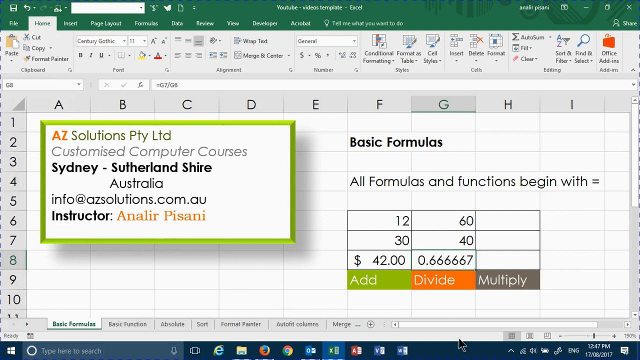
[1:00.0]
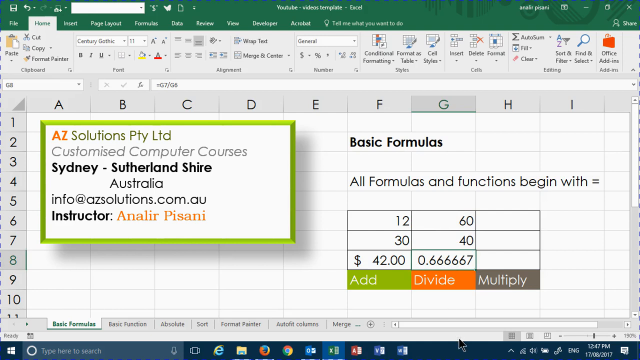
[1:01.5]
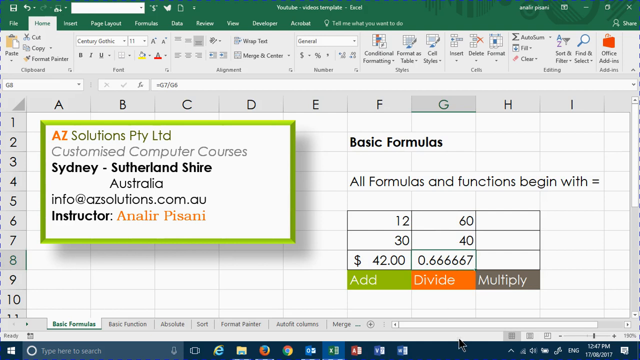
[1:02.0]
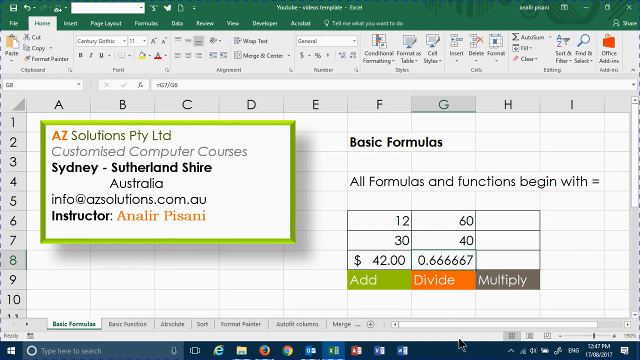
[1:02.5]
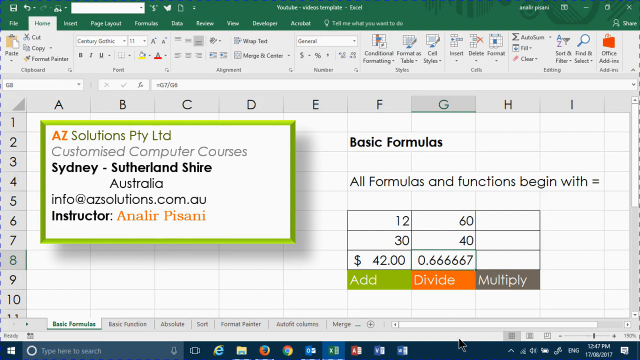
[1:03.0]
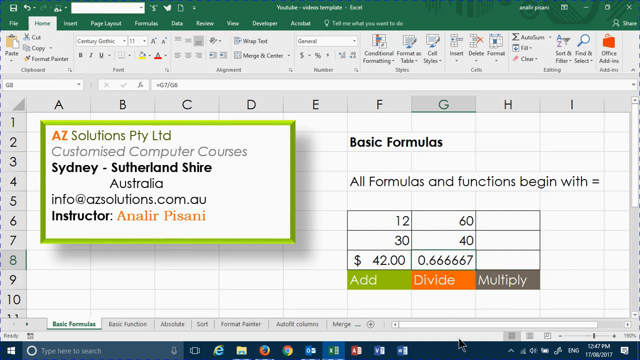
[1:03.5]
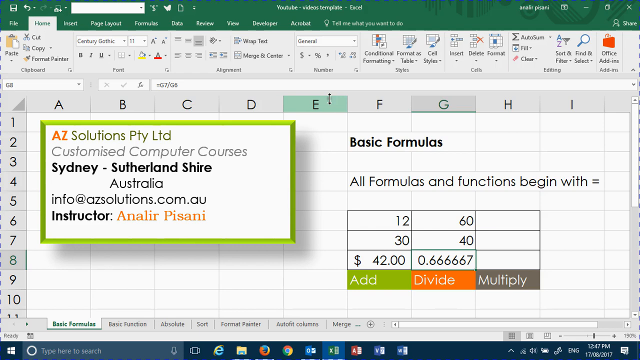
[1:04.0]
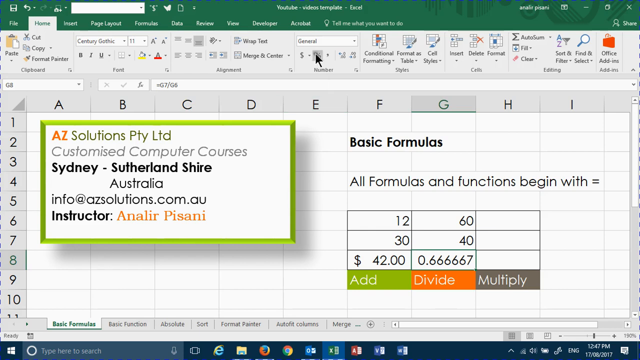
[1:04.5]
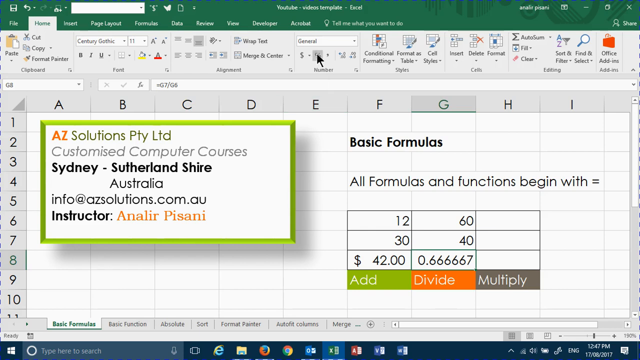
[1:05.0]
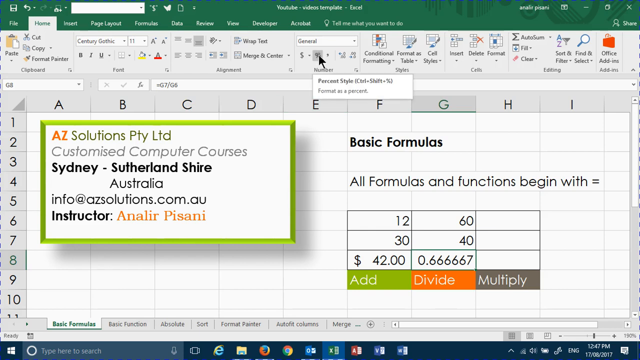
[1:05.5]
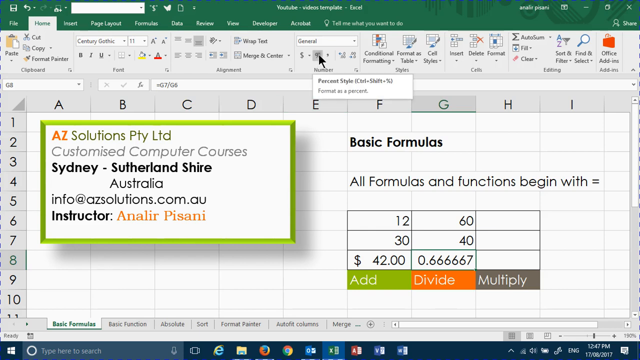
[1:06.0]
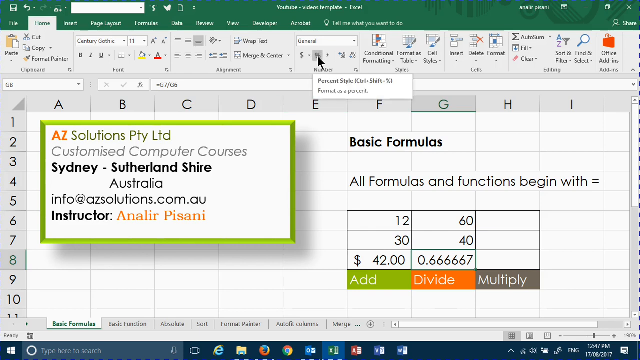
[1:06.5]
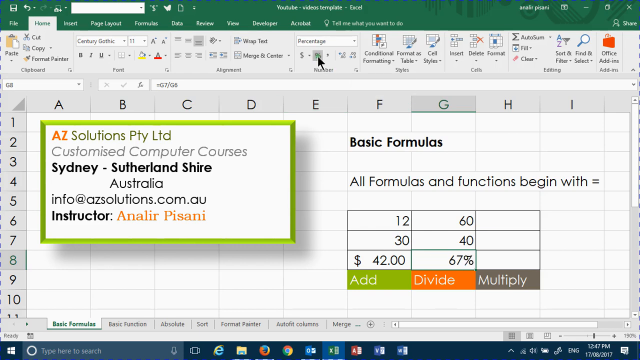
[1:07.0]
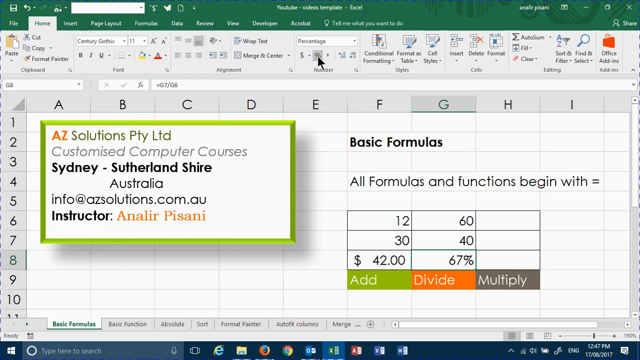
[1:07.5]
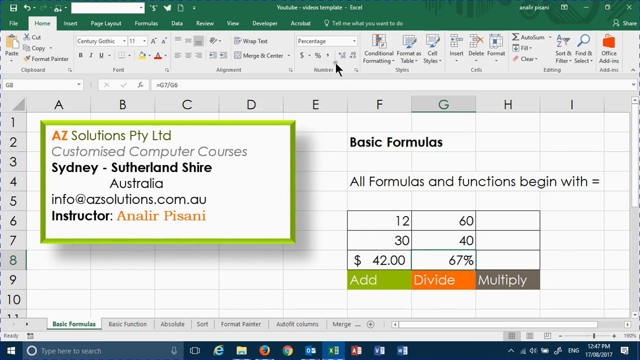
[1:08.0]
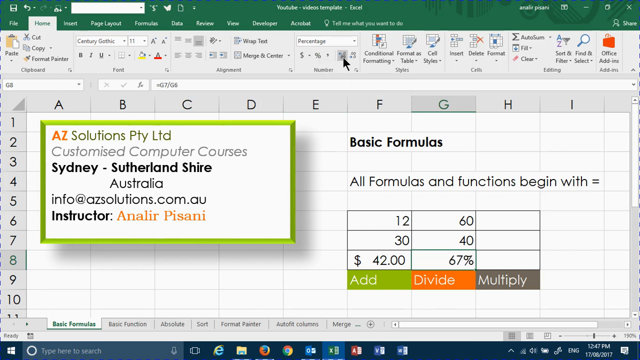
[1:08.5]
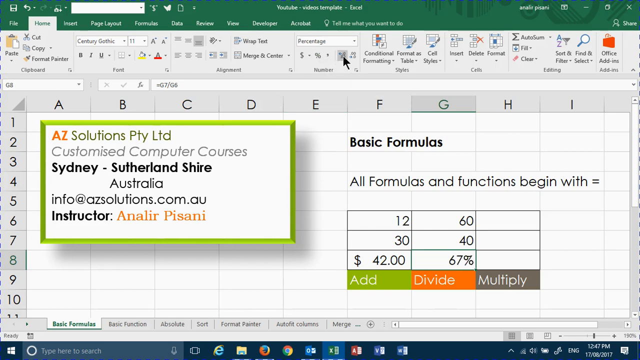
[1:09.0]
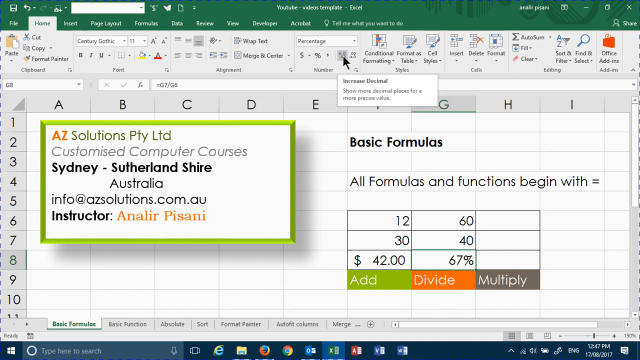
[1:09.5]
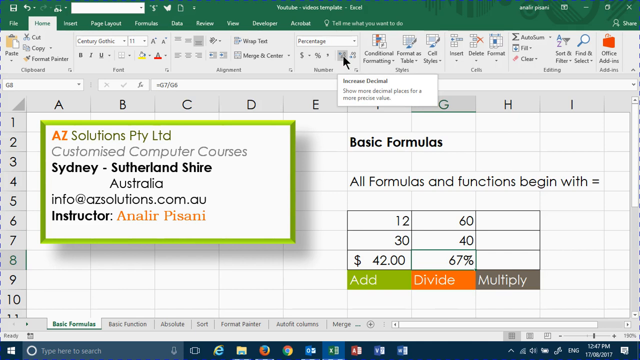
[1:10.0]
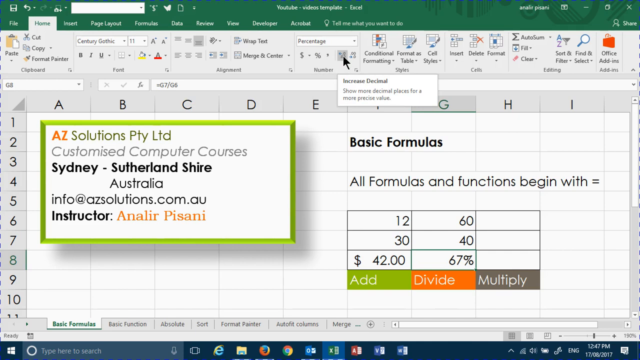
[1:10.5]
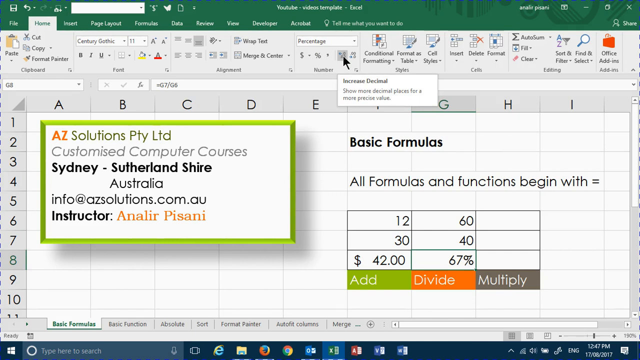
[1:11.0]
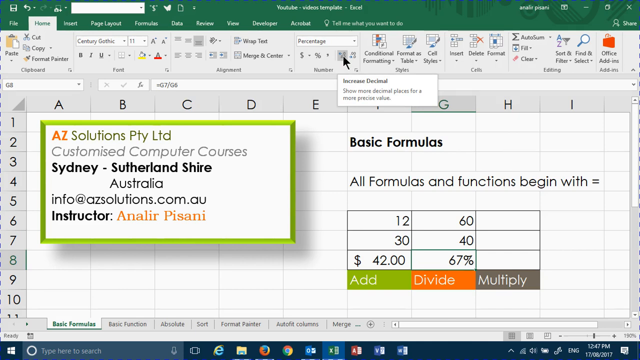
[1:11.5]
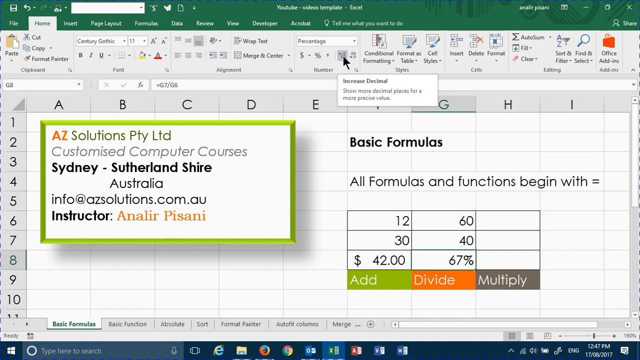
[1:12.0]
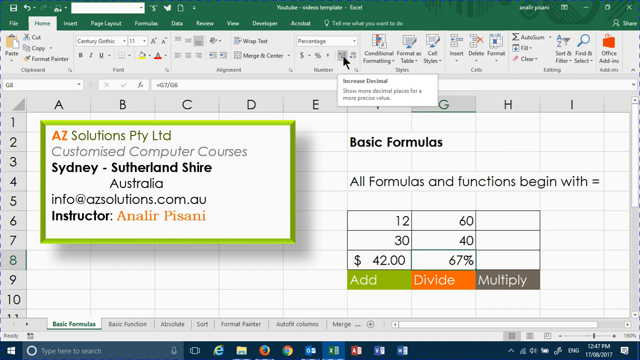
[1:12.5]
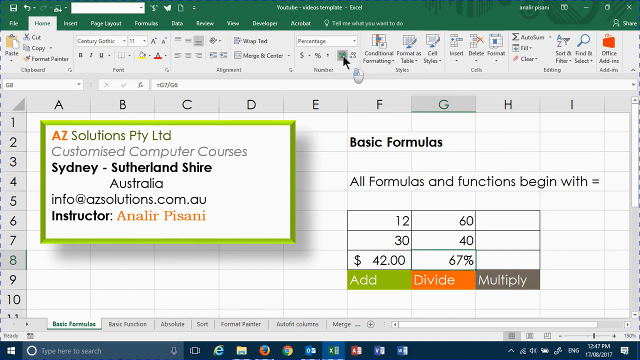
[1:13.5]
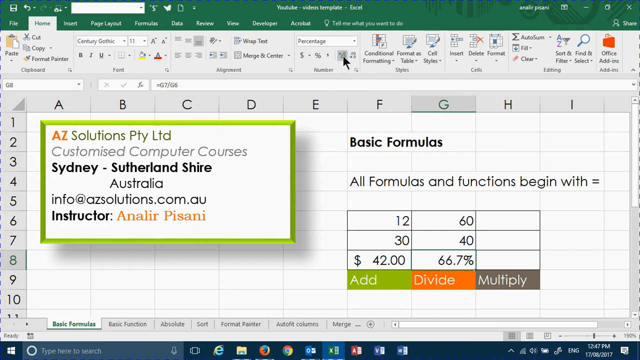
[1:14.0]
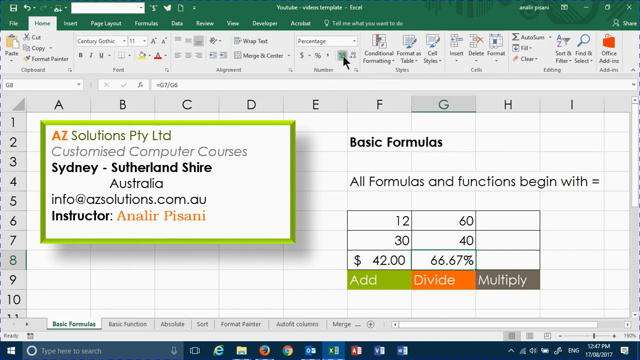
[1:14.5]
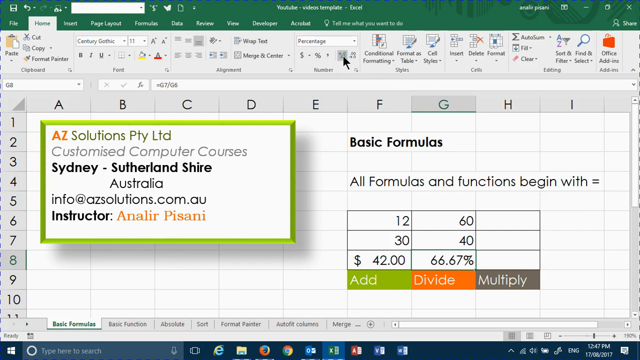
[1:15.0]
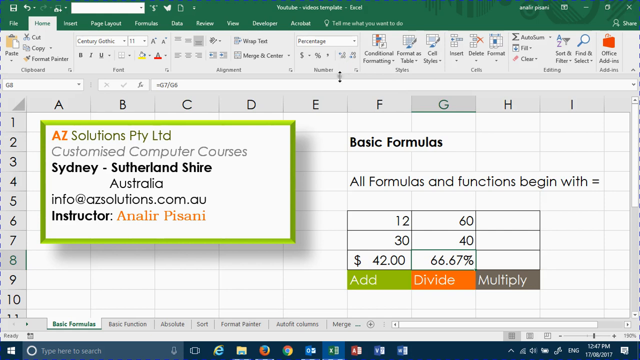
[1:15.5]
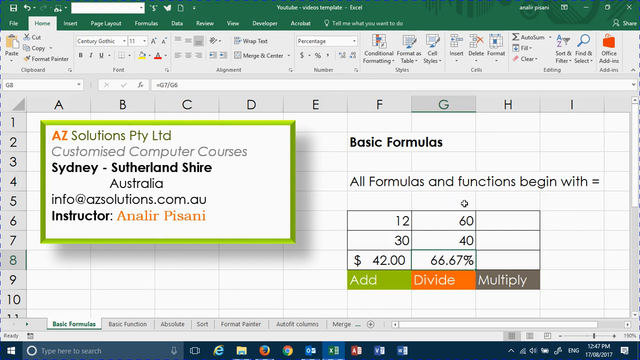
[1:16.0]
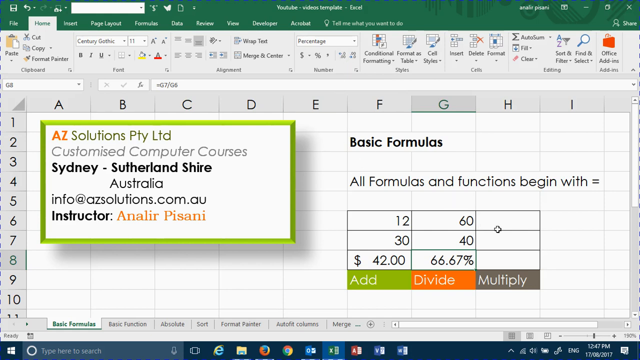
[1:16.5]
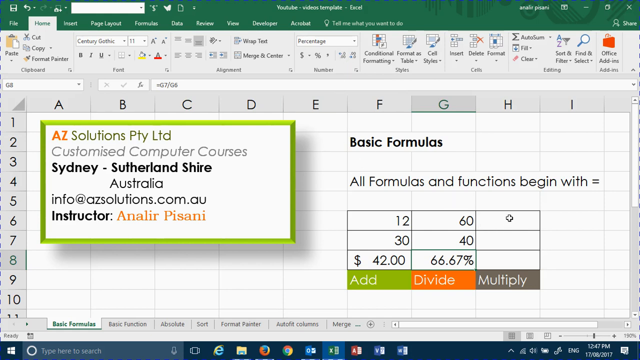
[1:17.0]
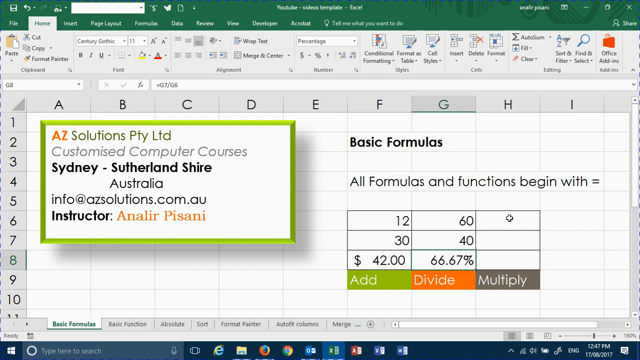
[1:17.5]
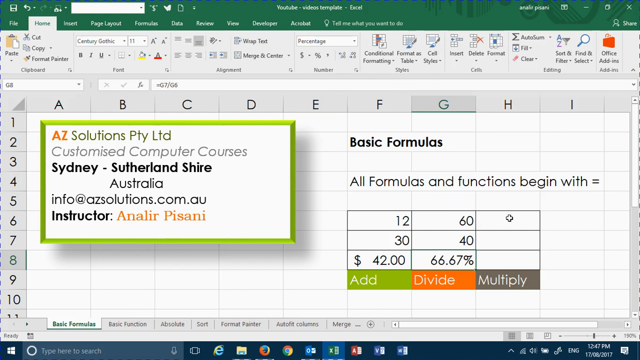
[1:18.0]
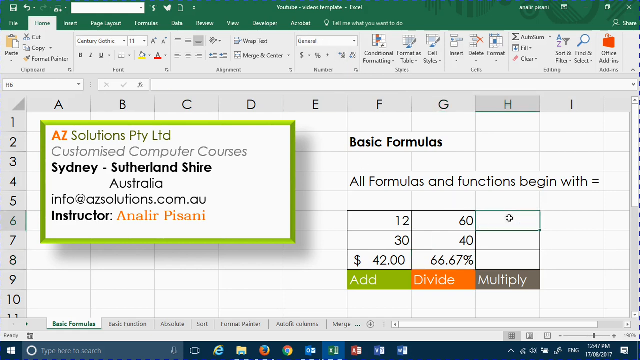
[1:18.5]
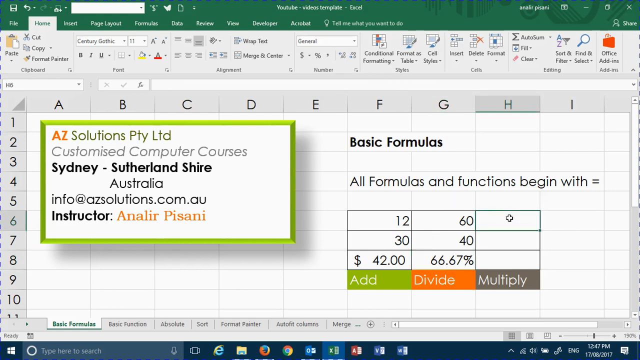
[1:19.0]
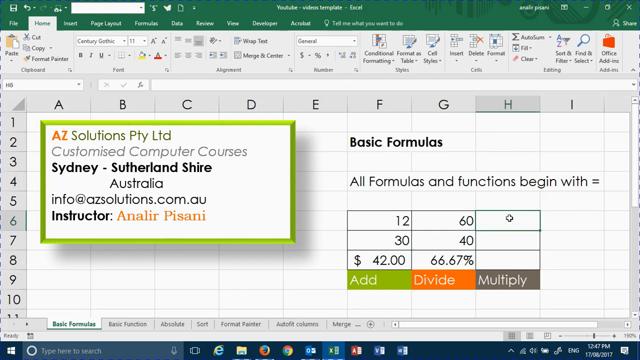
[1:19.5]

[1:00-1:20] At first nothing is being clicked, and the presenter seems to be sitting and waiting. The cursor appears to hover over the percent style setting, and the decimal result seems to be changed to a percentage, so the division output is shown as a percentage while the addition output is in dollars. Then column H, row 6 is clicked. At H9 there is a box saying "multiplication," and the formula for multiplying two cells together appears to be about to be entered.